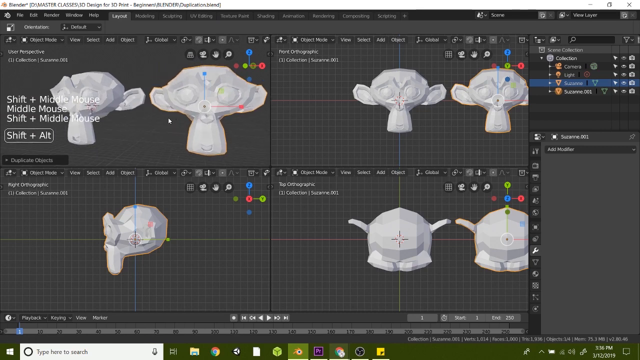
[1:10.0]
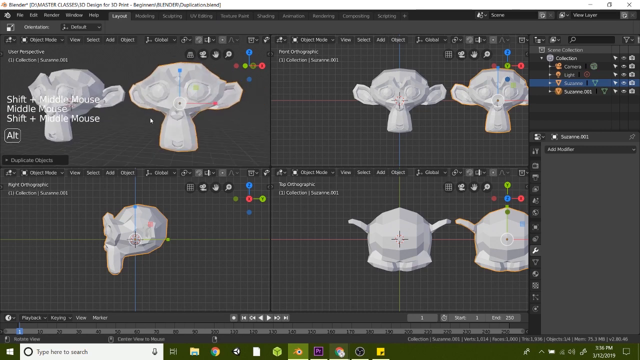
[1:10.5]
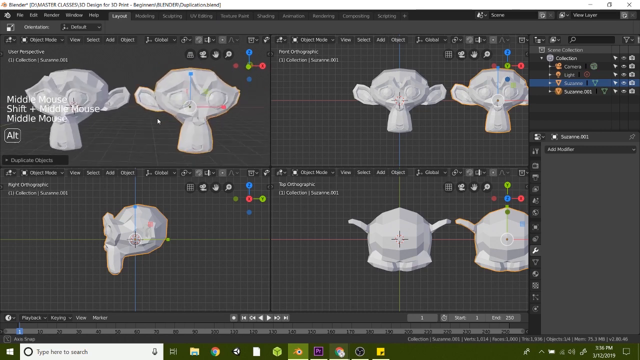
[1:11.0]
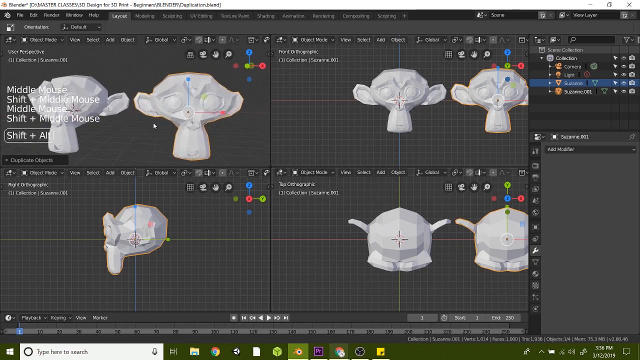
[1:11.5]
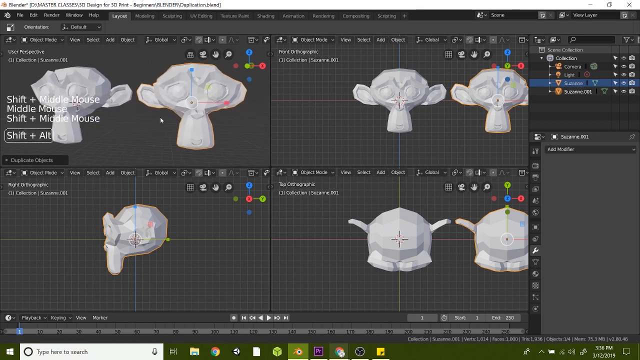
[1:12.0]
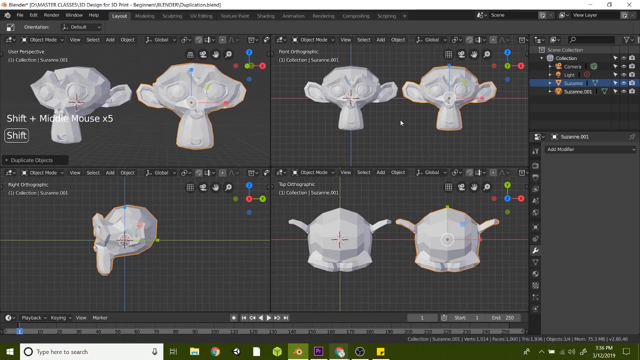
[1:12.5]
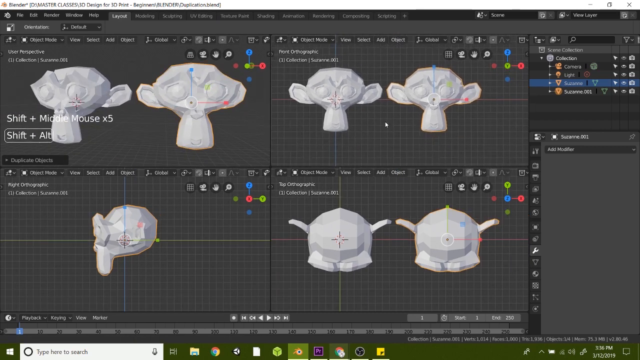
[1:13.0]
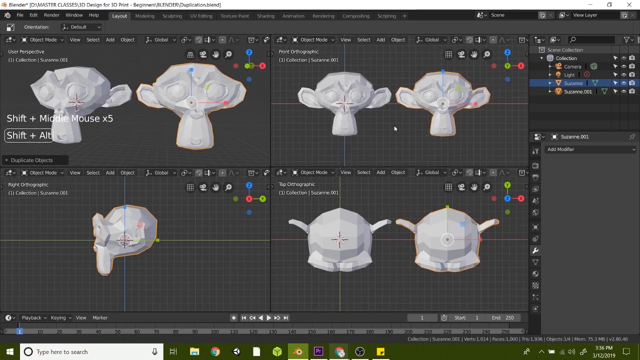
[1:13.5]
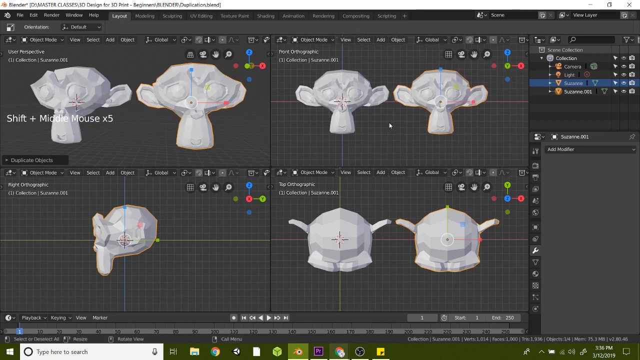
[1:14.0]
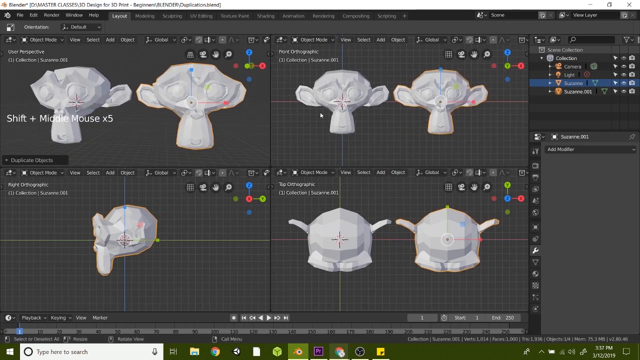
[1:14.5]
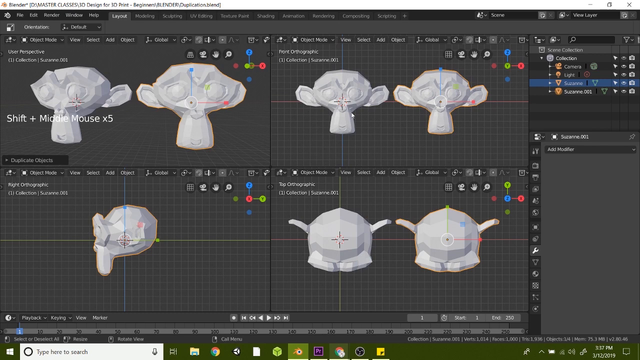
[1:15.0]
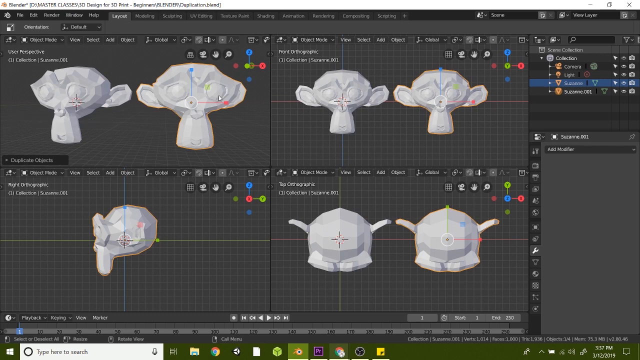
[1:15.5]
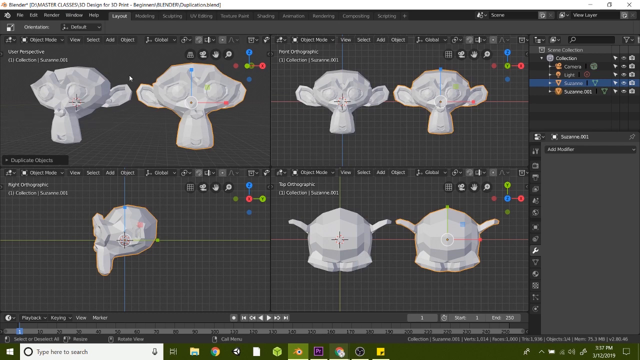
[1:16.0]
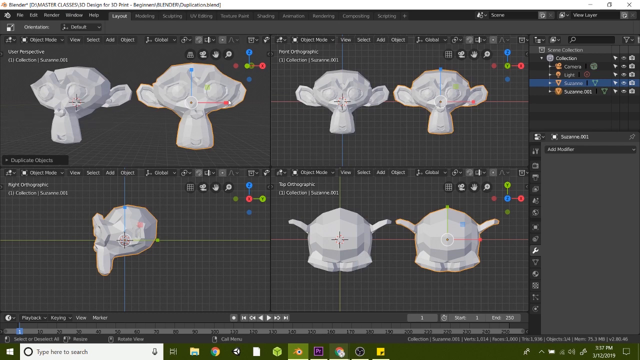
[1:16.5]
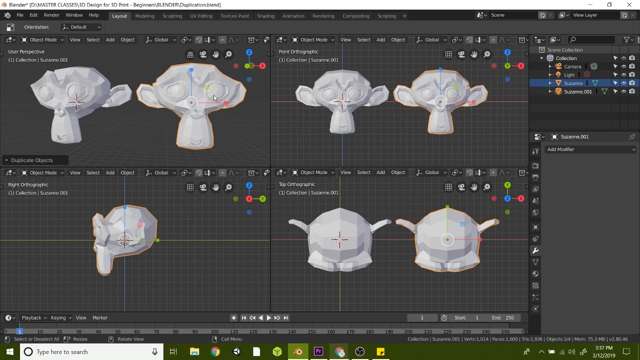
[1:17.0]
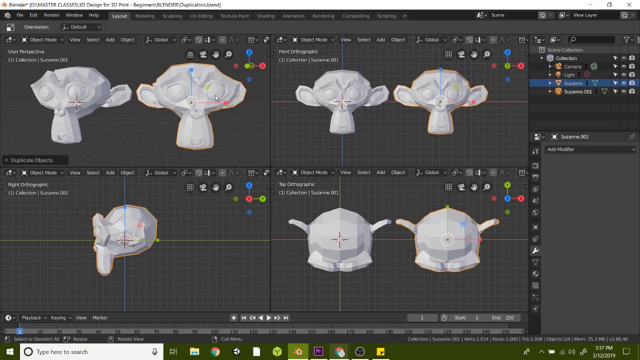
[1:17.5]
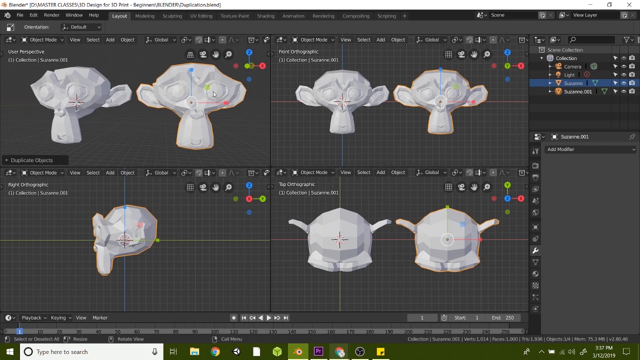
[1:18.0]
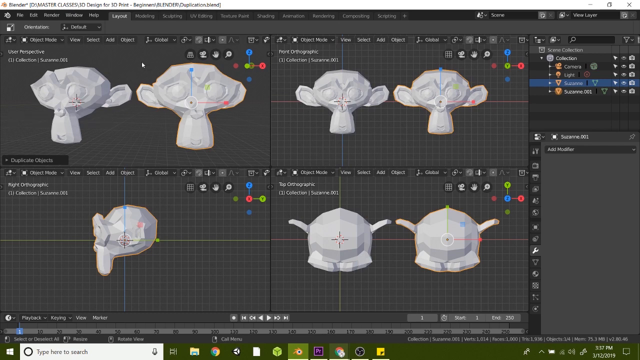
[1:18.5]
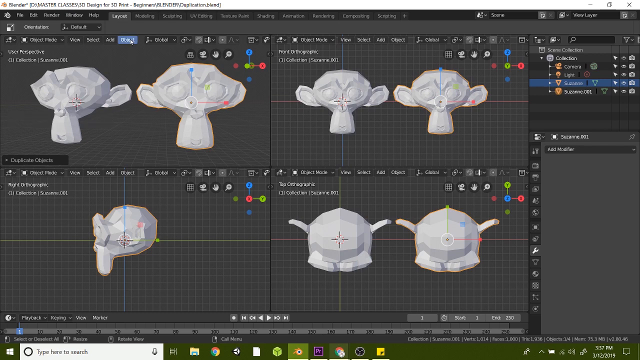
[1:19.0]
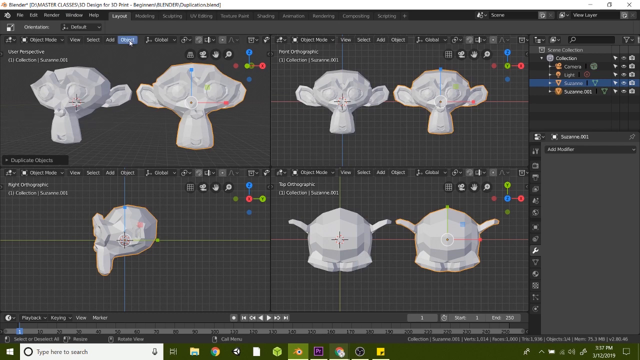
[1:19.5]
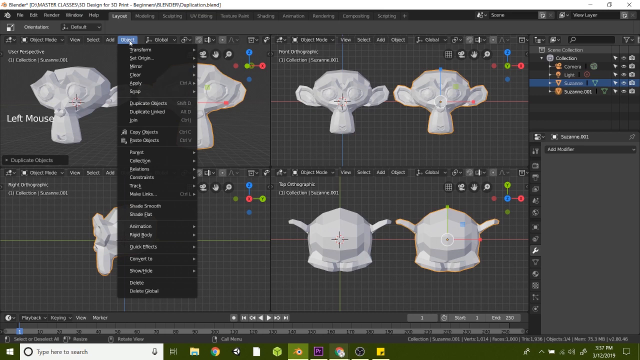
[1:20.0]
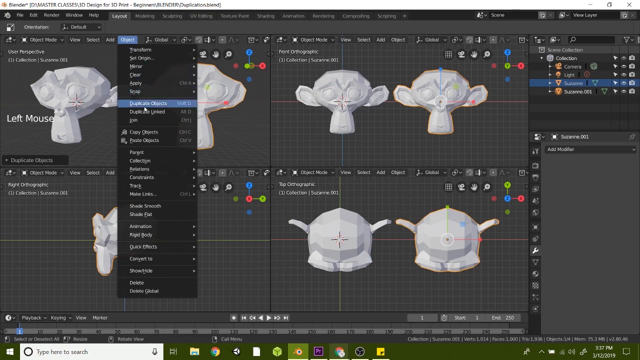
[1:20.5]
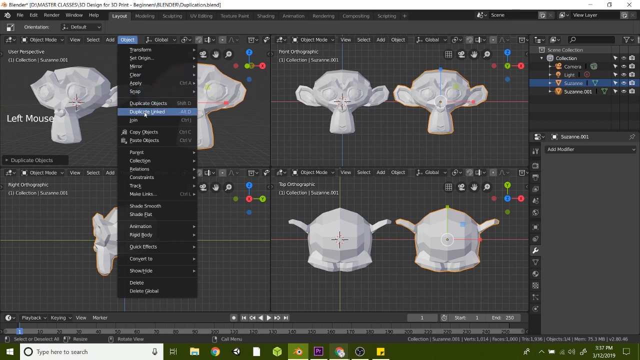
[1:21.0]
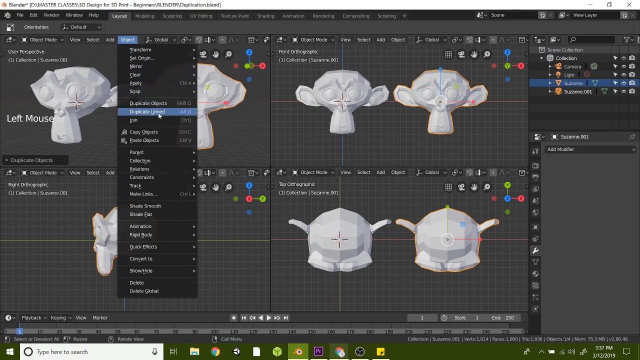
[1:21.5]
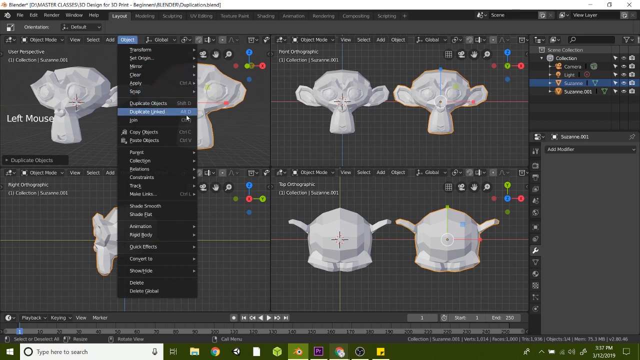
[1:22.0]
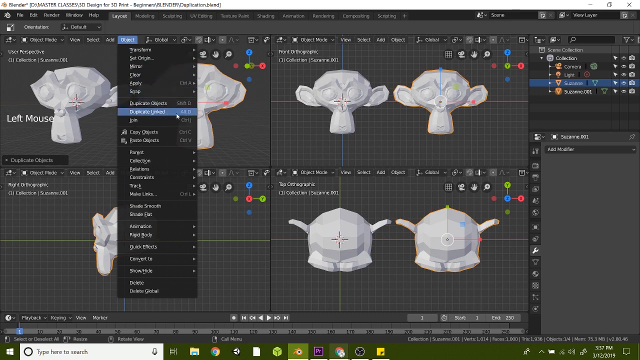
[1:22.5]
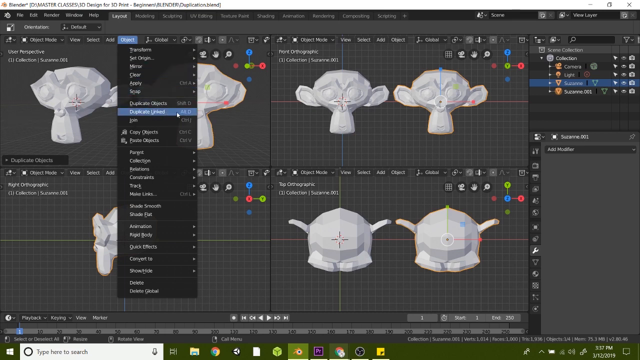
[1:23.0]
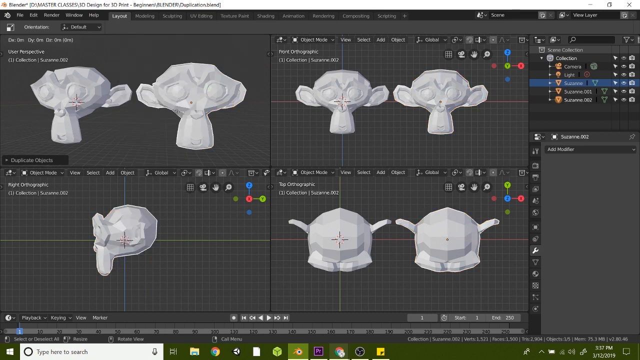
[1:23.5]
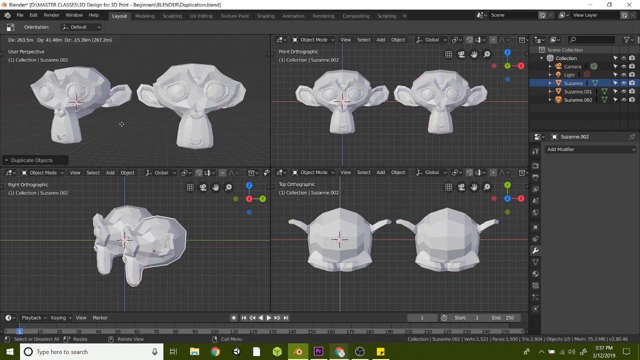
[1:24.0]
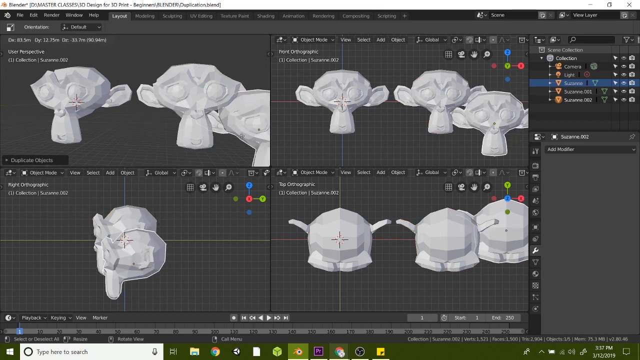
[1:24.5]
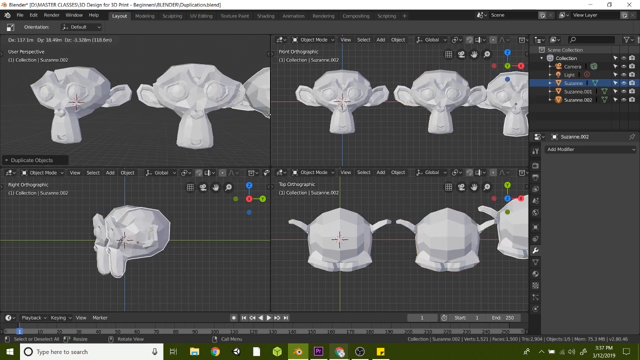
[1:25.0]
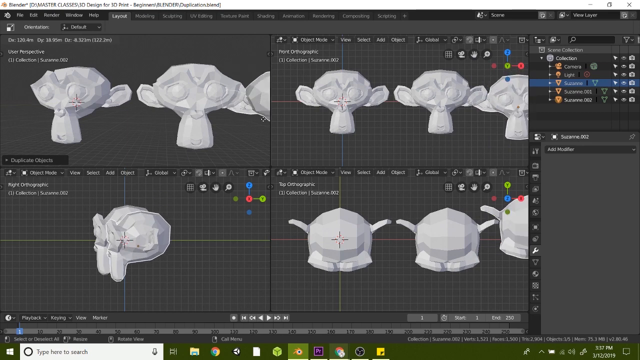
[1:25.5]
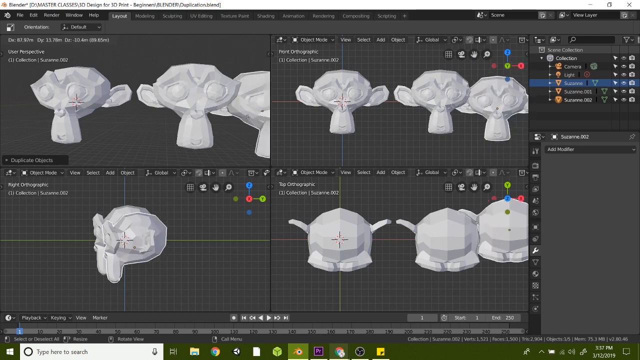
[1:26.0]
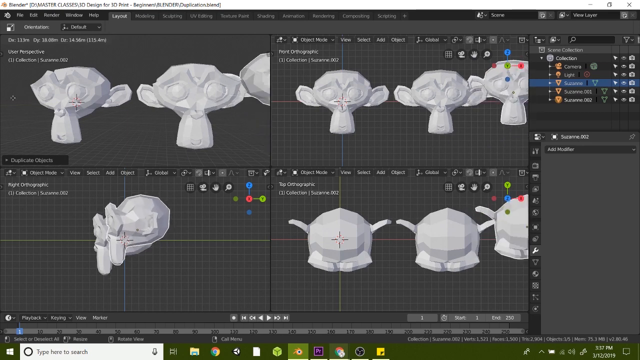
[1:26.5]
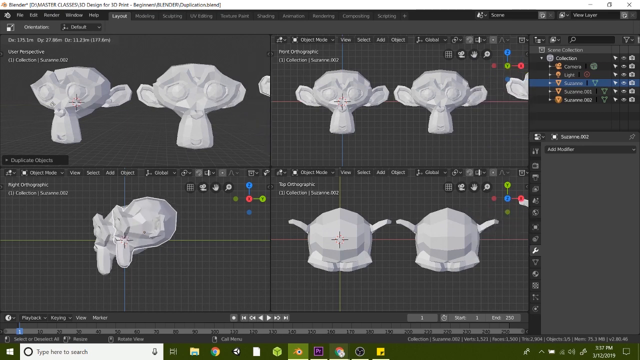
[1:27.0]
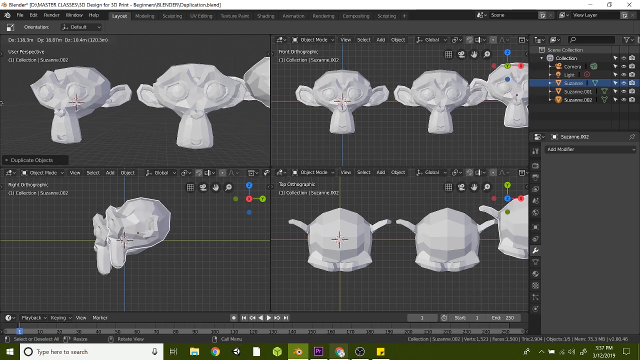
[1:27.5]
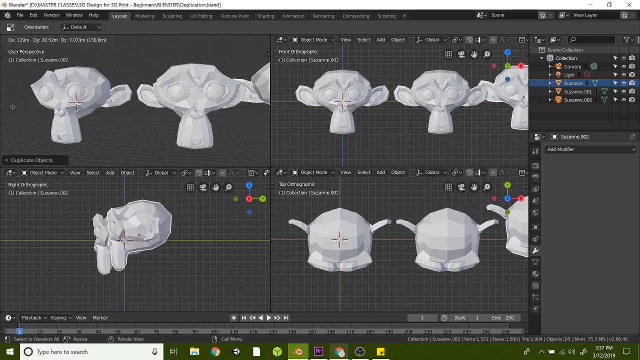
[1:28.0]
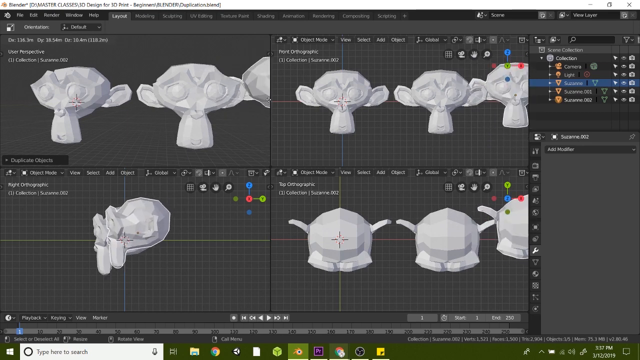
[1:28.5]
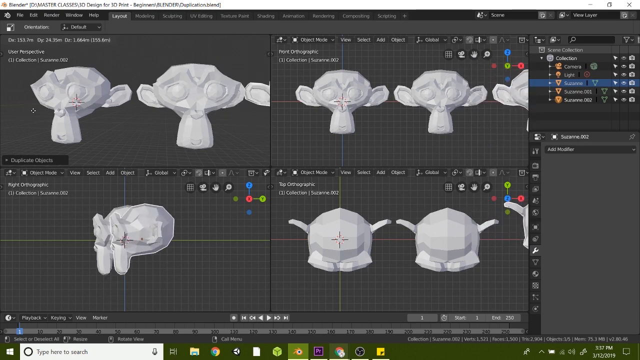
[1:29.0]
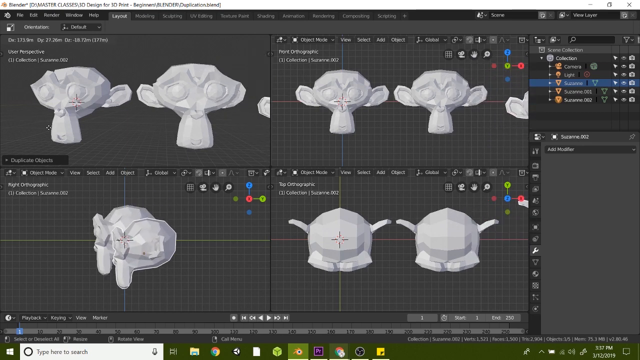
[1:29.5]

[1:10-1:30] The man seems to be copying and pasting in Blender, showing users how it is done.